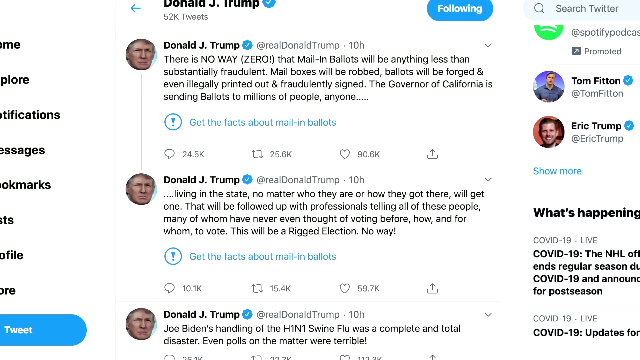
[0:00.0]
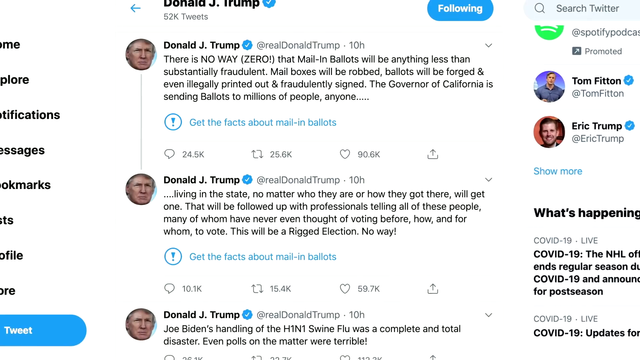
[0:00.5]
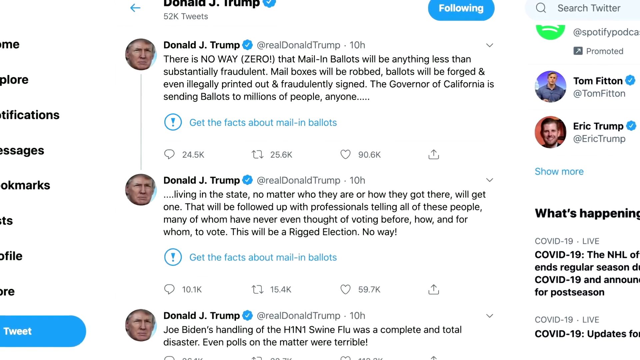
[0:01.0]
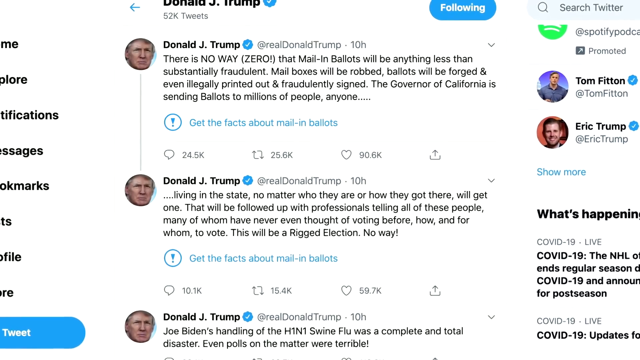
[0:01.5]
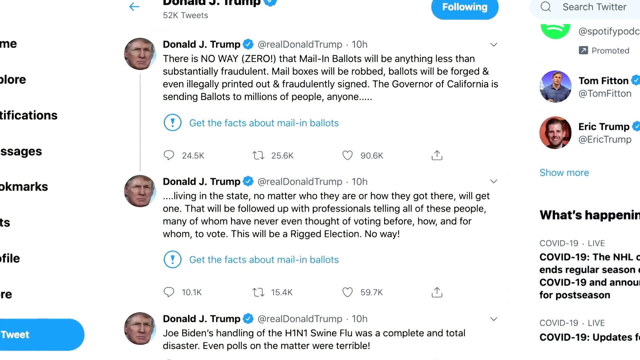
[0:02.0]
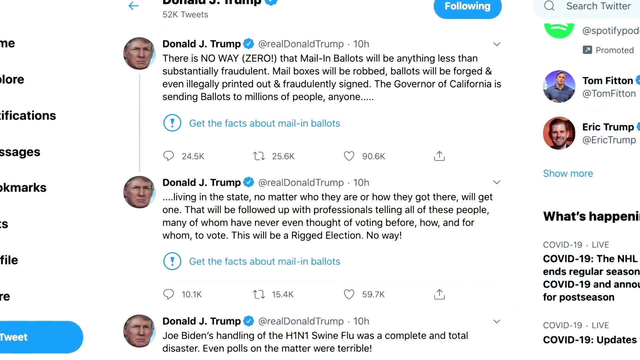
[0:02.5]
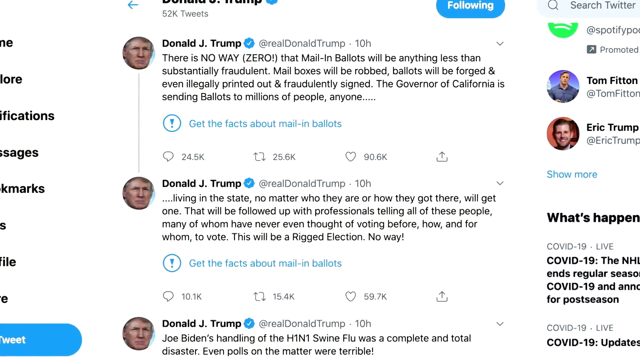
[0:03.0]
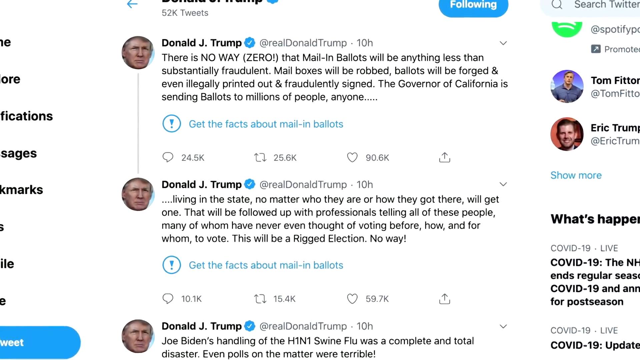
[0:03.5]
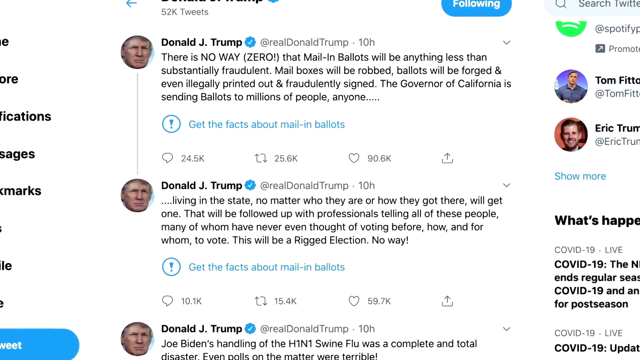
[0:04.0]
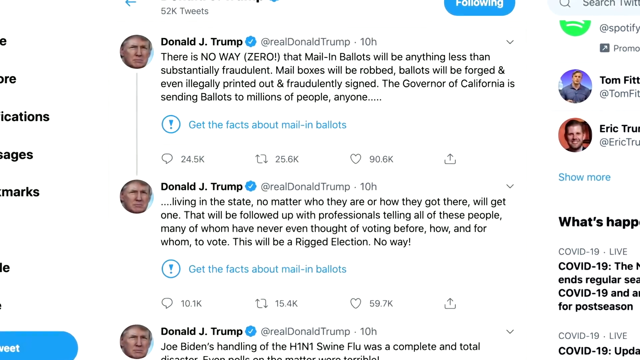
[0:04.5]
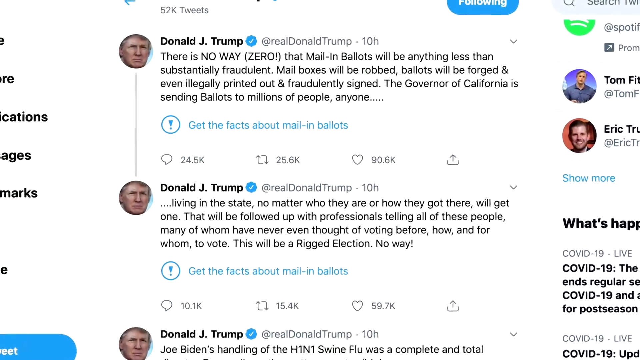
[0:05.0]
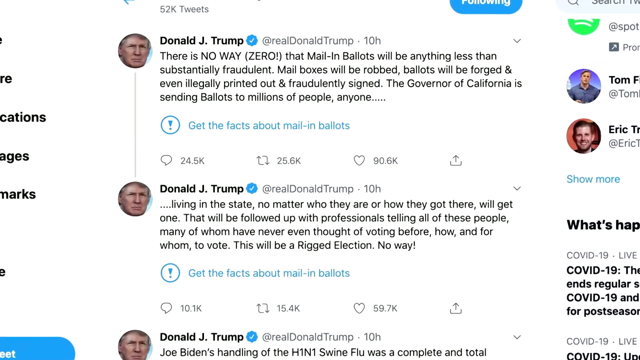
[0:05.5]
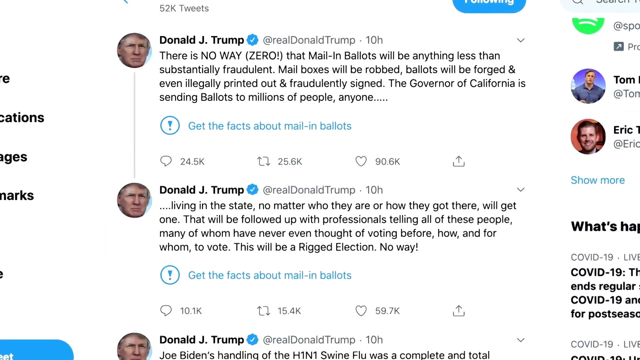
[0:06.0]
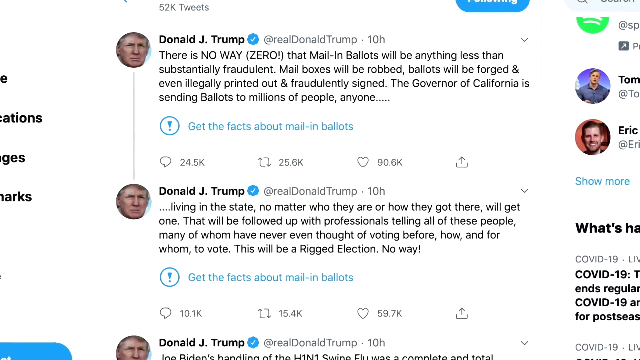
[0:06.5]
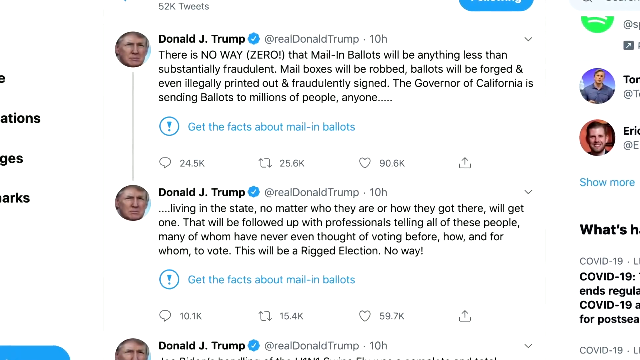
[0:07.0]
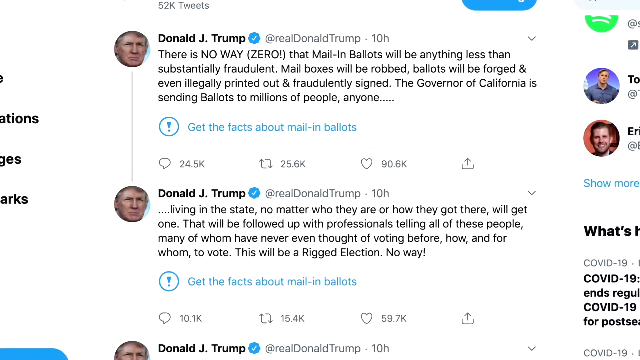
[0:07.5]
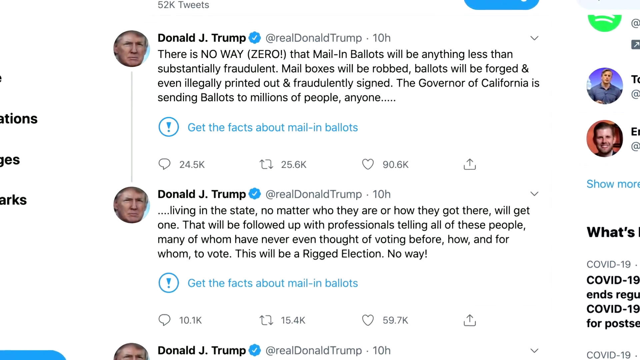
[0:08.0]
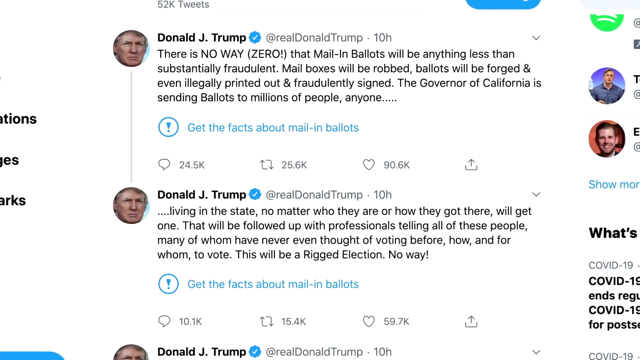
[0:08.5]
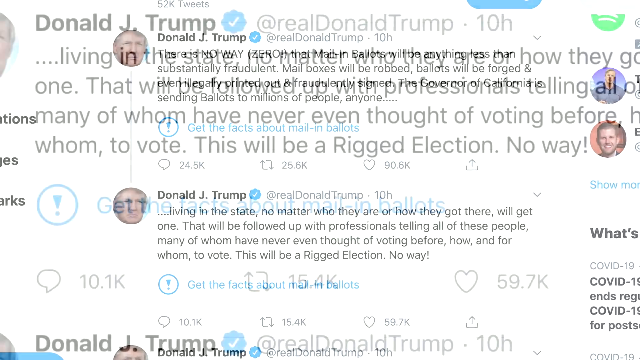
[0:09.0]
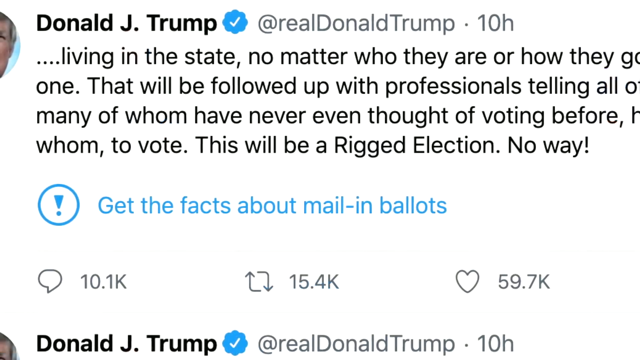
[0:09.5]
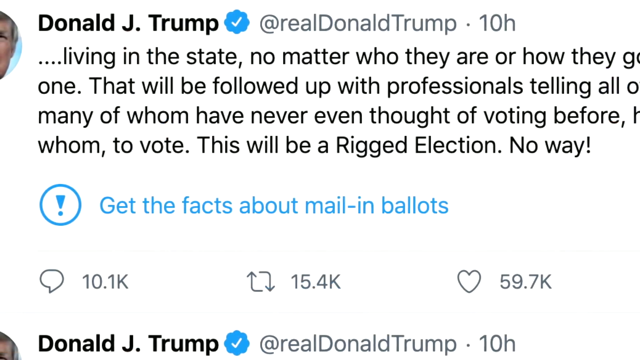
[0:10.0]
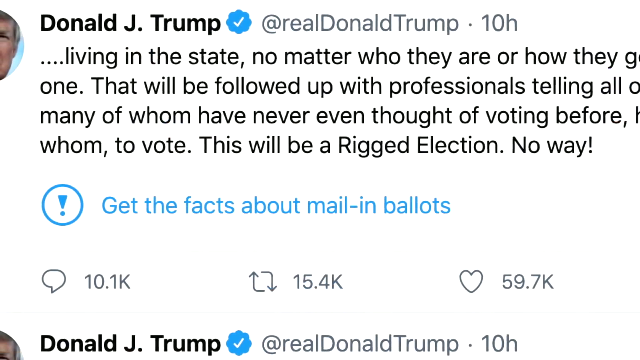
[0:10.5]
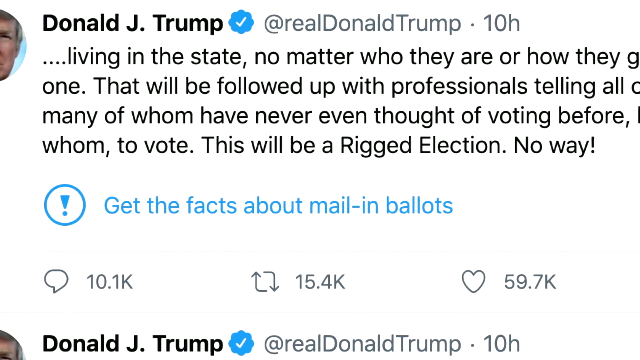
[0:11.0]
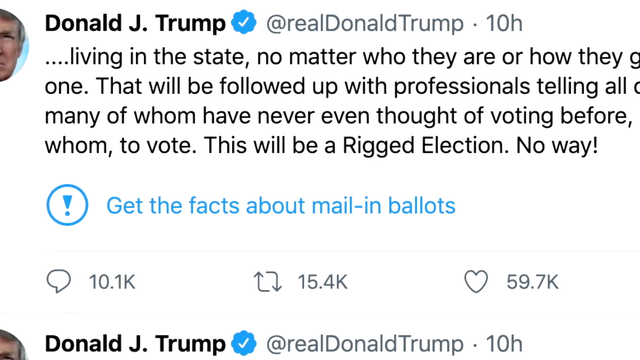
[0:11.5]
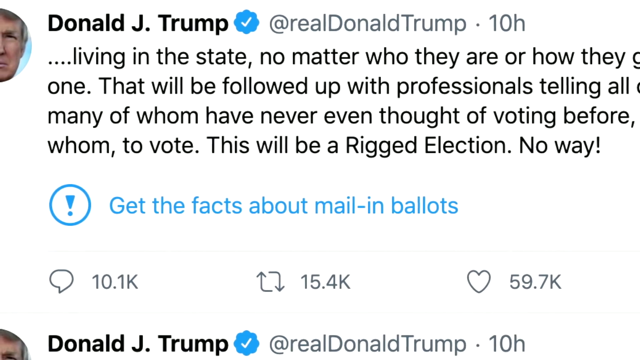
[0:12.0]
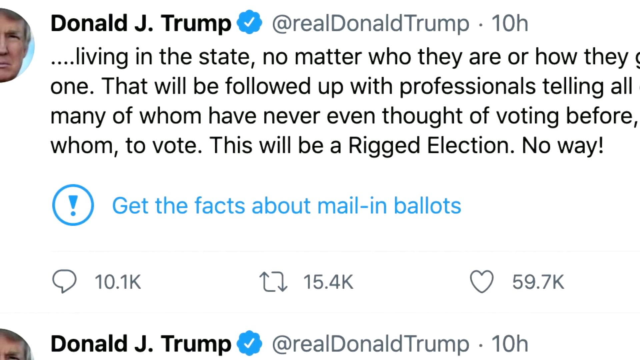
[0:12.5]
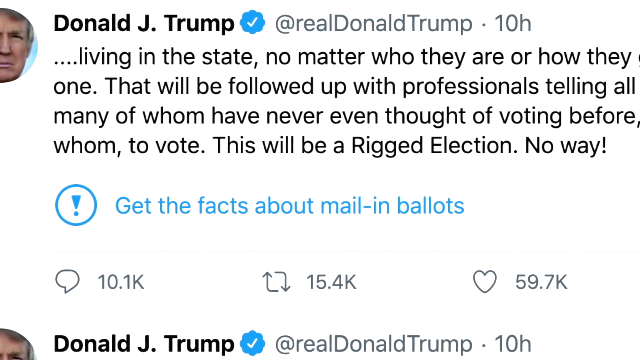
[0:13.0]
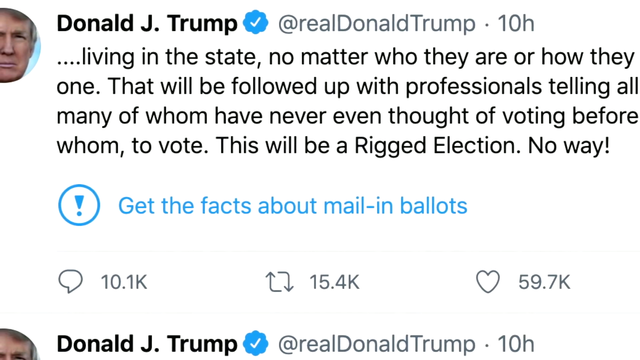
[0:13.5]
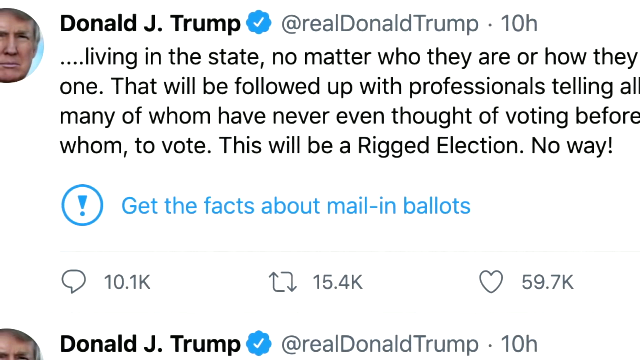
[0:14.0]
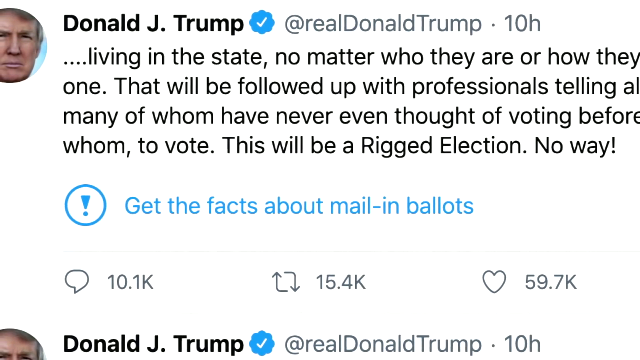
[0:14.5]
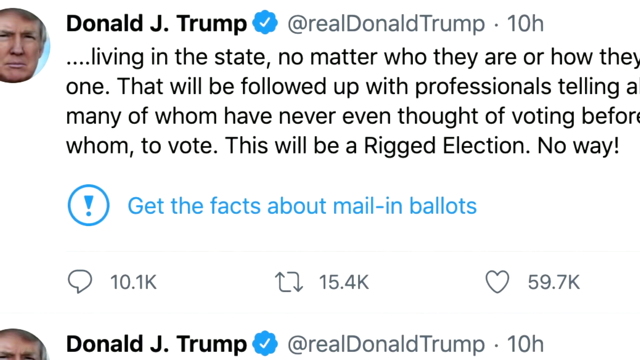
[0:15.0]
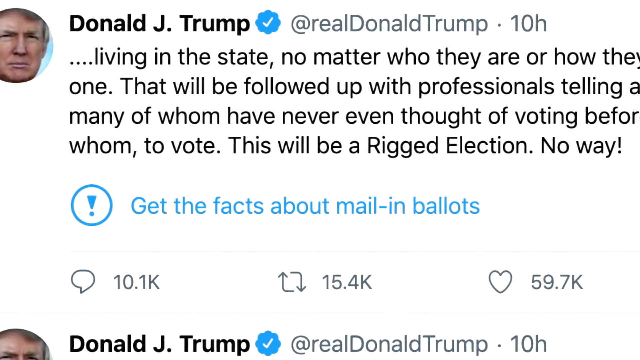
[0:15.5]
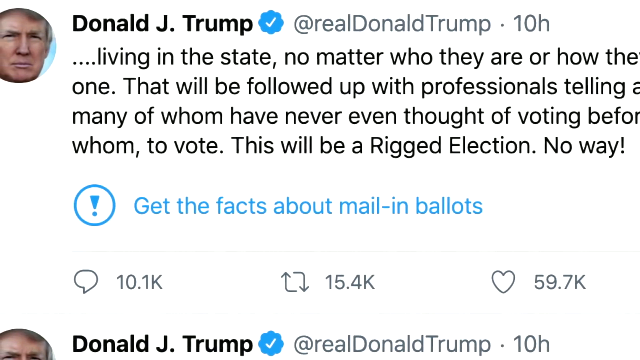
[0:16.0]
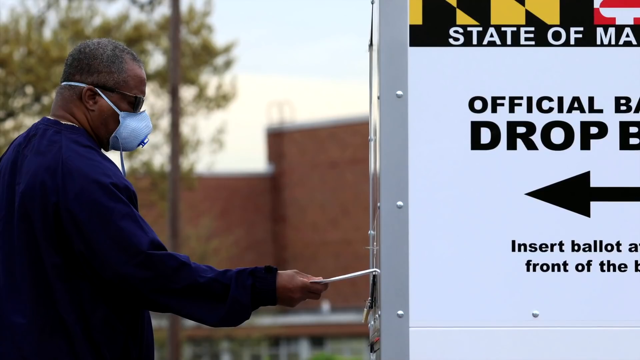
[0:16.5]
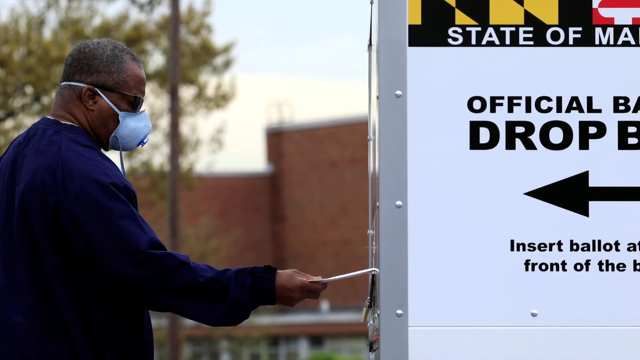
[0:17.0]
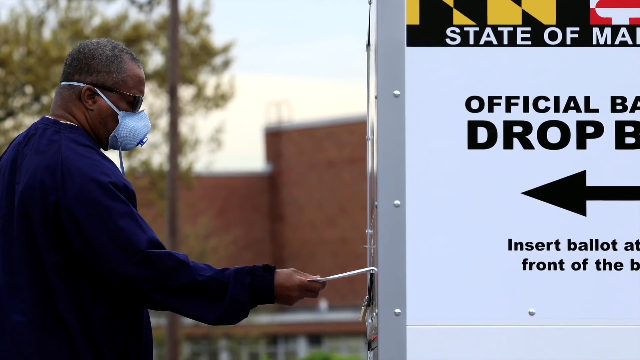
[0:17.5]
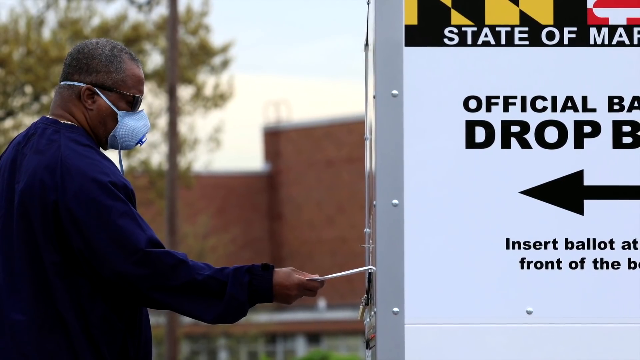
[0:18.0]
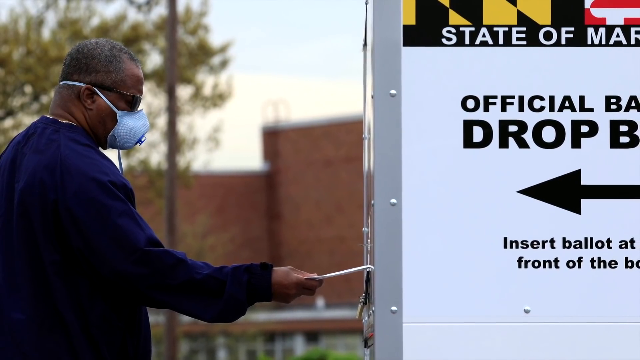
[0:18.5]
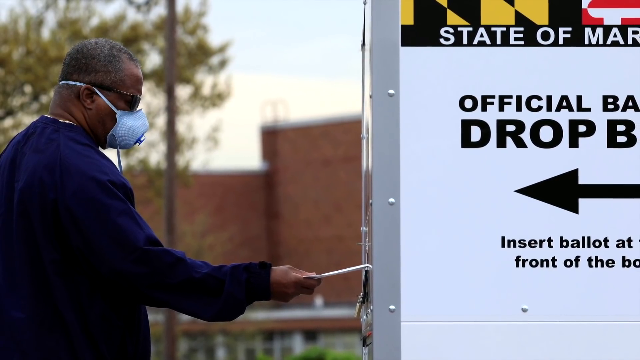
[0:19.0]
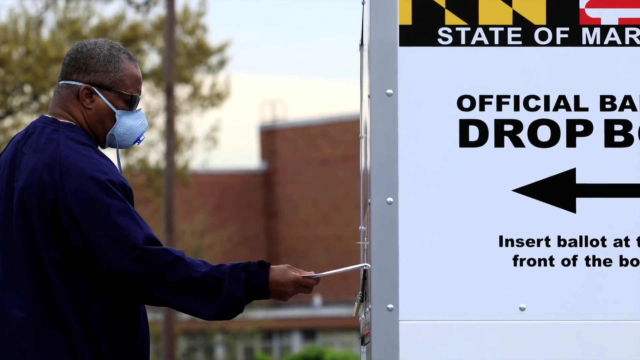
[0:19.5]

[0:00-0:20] The video opens on the Twitter page of Donald J. Trump, real Donald Trump. Viewed from the top down, the account is verified and shows that he had 52,000 tweets at that time. The first tweet reads: "There's no way zero that mail-in ballots will be anything less than substantially fraudulent. Mailboxes will be robbed, ballots will be forged and even illegally printed out and fraudulently signed. The governor of California is sending ballots to millions of people. Anyone living in the state no matter who they are or how they got there. That will be followed up with professionals telling all of these people, many of whom have never even thought of voting before, how and for whom to vote. This will be a rigged election. No way." Another tweet reads: "Joe Biden's handling of the H1N1 swine flu was complete and total disaster. Even the polls on the matter were terrible."